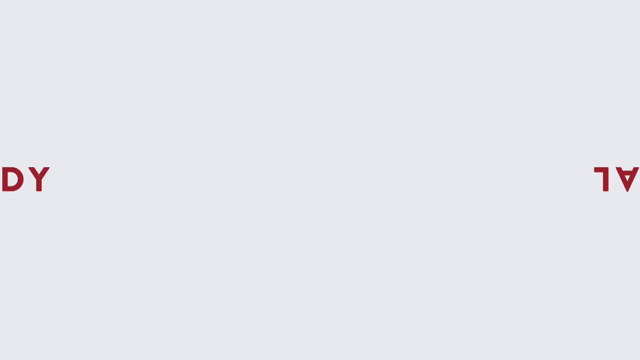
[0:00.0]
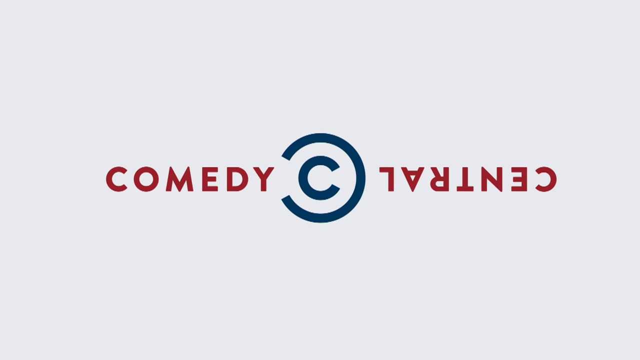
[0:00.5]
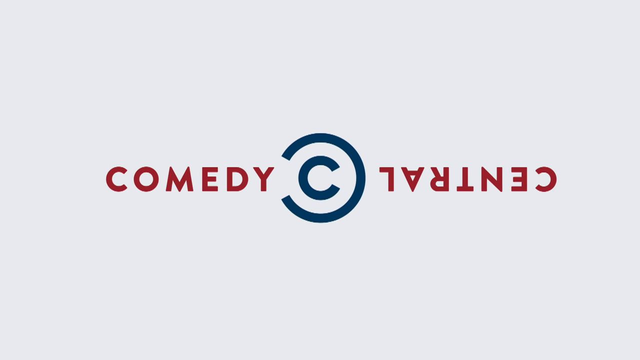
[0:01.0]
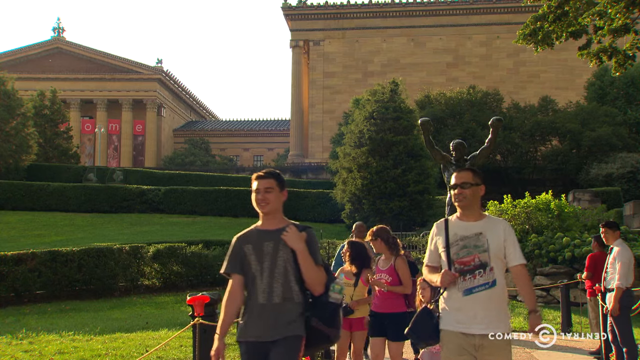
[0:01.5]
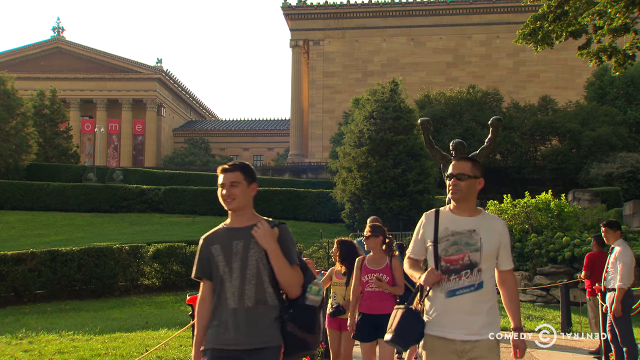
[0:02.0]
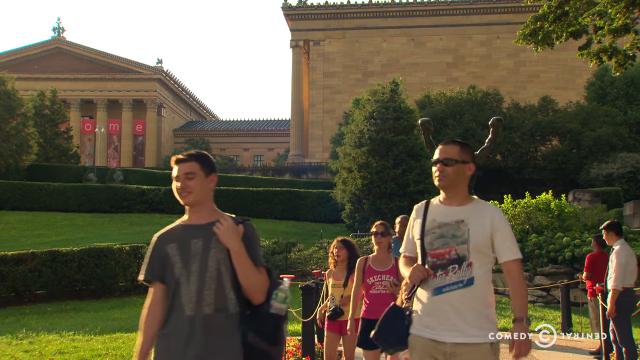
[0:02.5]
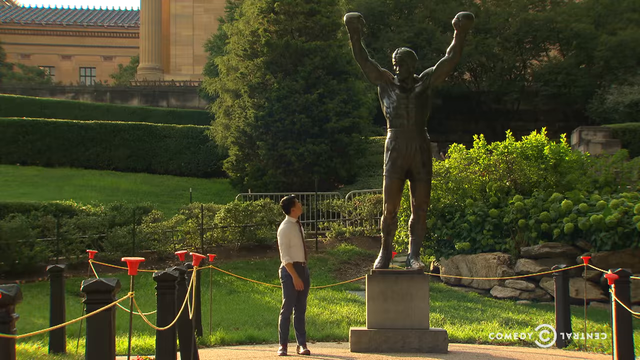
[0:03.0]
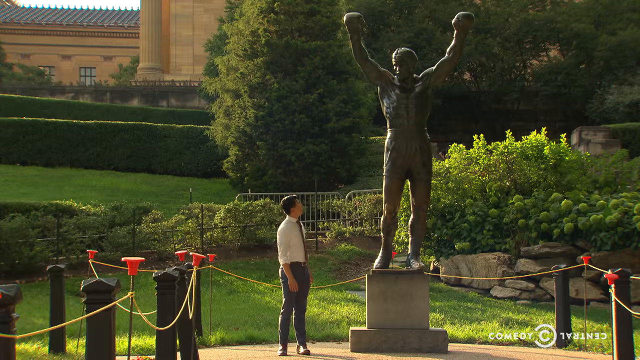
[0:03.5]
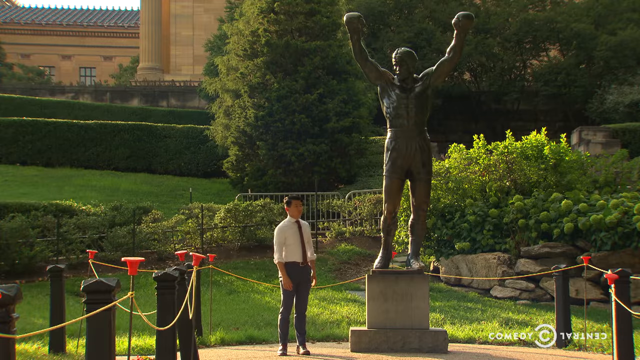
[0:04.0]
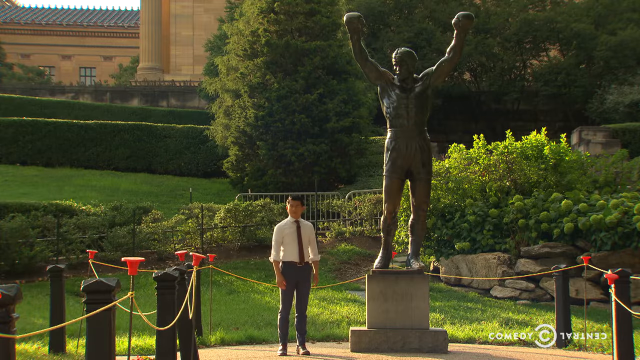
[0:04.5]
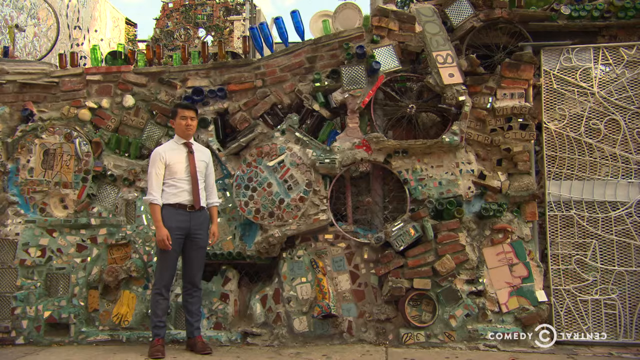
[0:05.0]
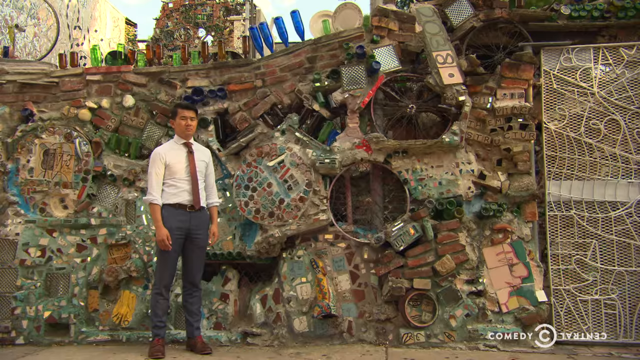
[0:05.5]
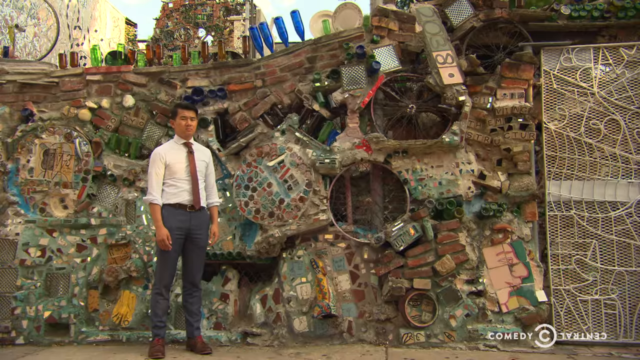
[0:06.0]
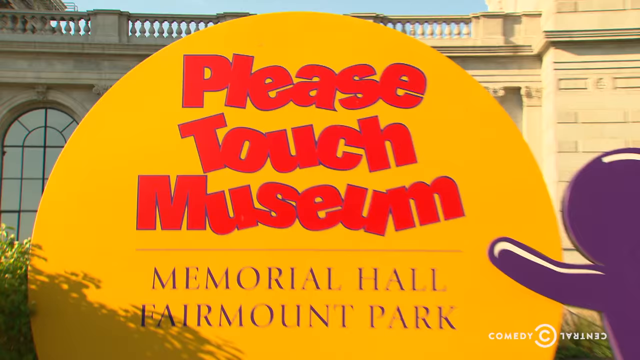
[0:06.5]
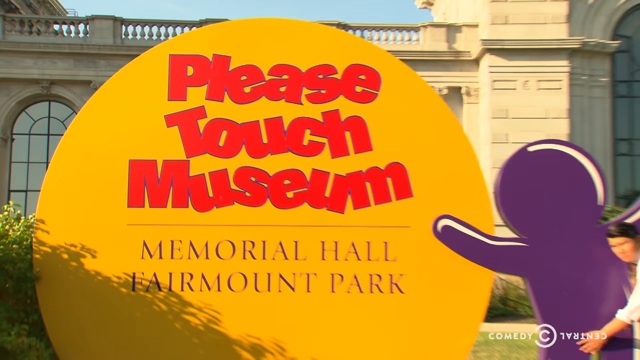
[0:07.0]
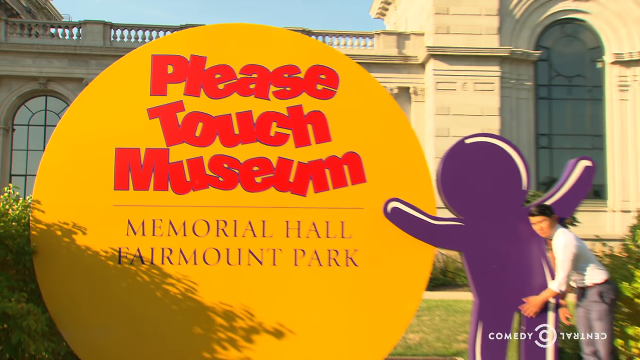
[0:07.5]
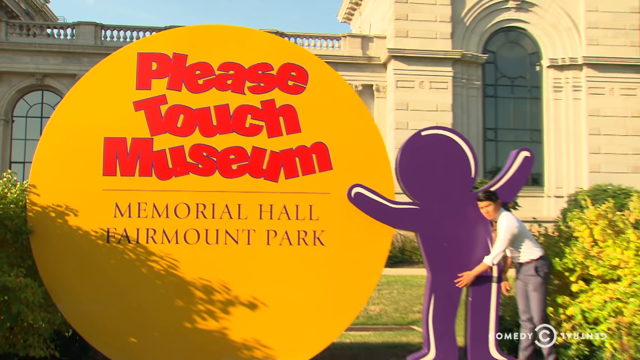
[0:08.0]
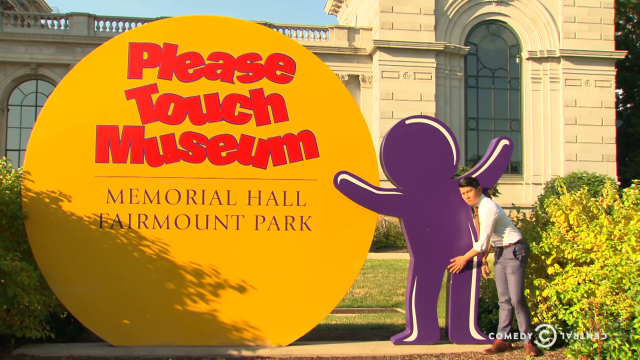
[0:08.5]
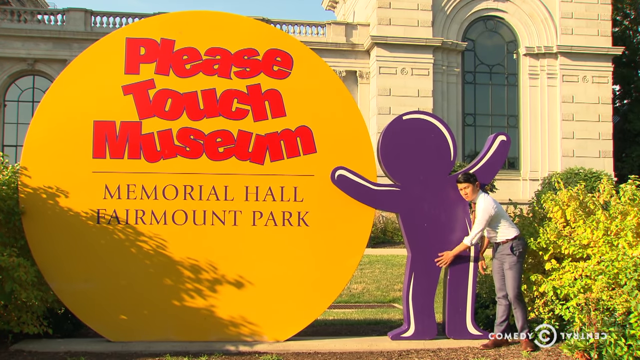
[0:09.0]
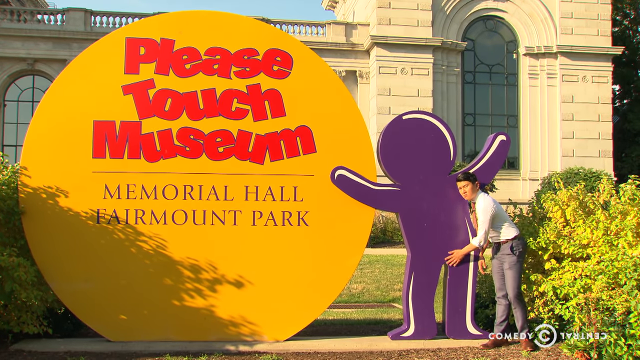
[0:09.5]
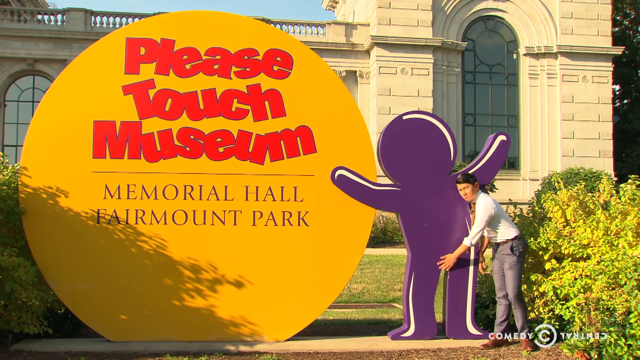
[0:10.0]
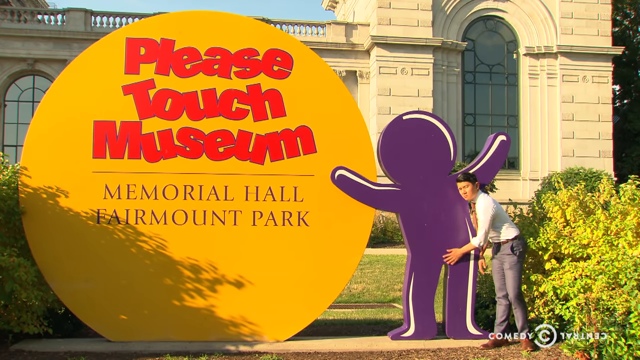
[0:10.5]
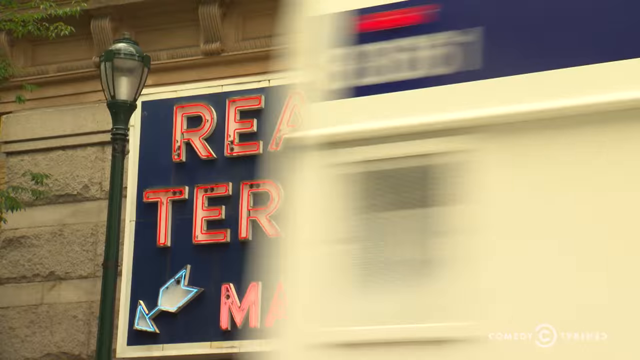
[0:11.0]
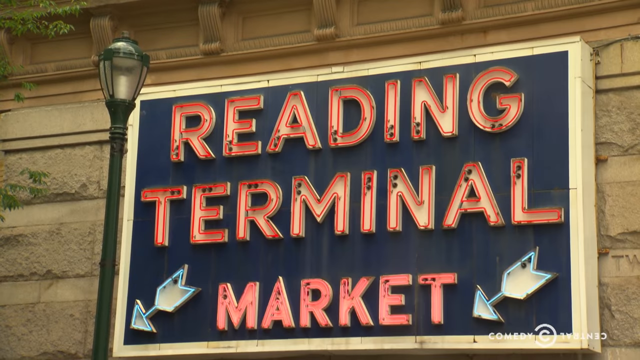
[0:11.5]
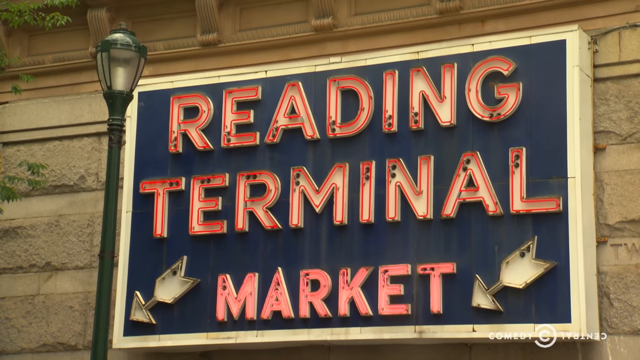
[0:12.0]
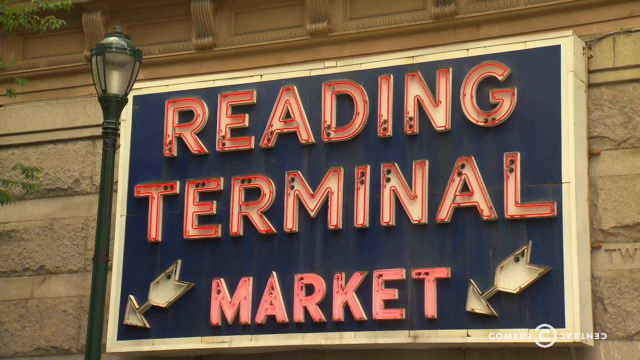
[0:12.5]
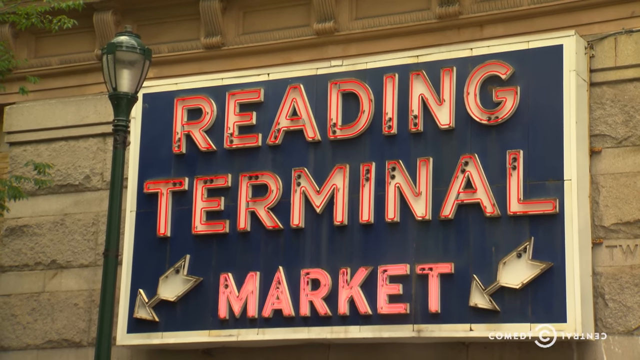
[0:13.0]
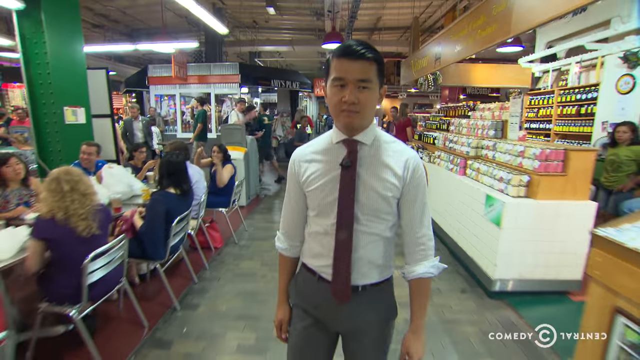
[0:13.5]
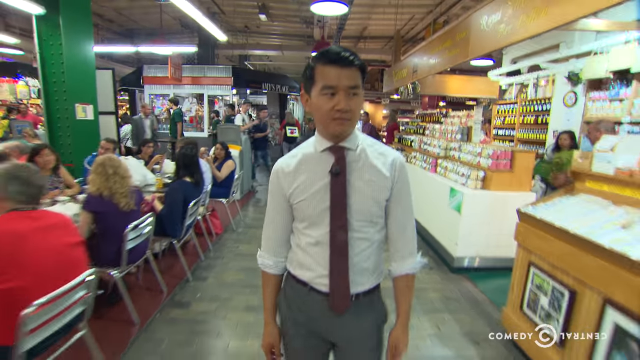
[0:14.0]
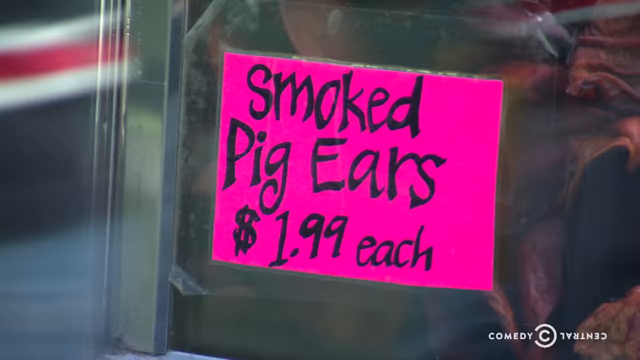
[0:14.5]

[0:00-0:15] A reporter is shown: an Asian man in his late 20s or early 30s wearing a white button-down dress shirt, gray pants and a tie. He walks around to different areas, one of which looks like a college campus. He stands next to a statue of Rocky Balboa with his arms stretched up. He also stands next to a statue with the picture of a cartoon character, beside a sign that says "Please Touch Museum," and rubs his hand around the crotch area of the statue. He also stands next to a wall of garbage, and next to a sign that says "Reading Market Terminal," apparently in Philadelphia. In one short vignette there are some people who look like college students, and he appears to be walking in a cafeteria of some sort where there seem to be elderly people.